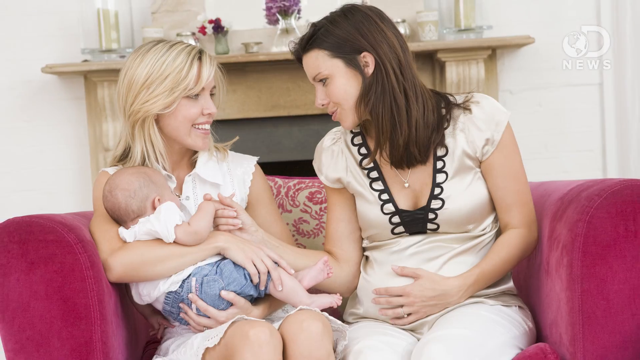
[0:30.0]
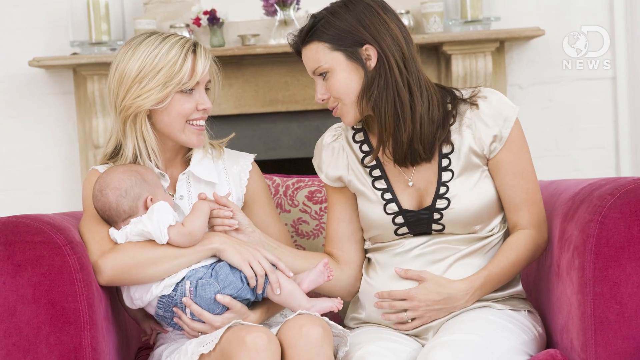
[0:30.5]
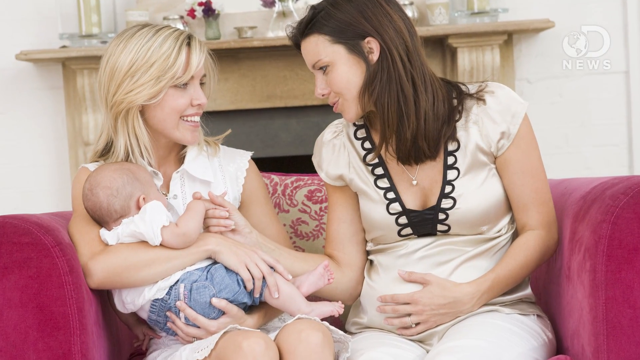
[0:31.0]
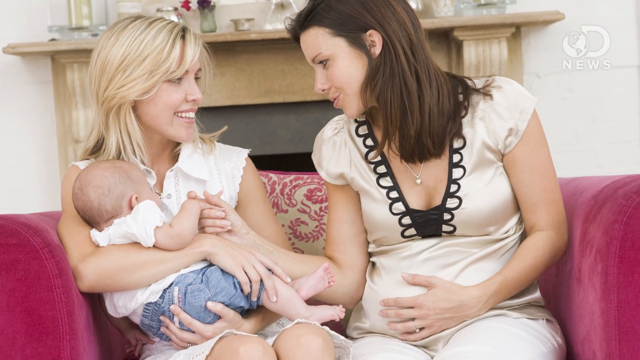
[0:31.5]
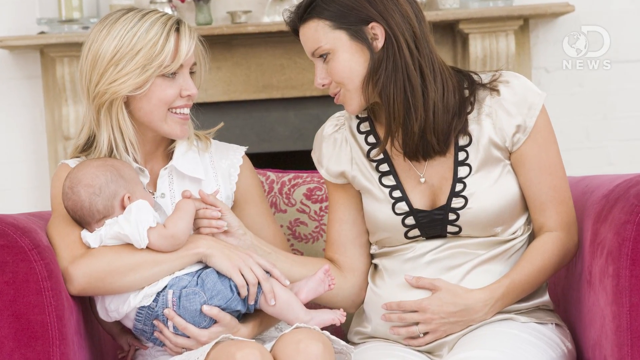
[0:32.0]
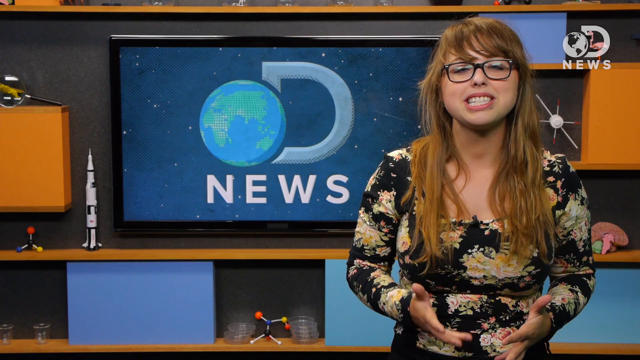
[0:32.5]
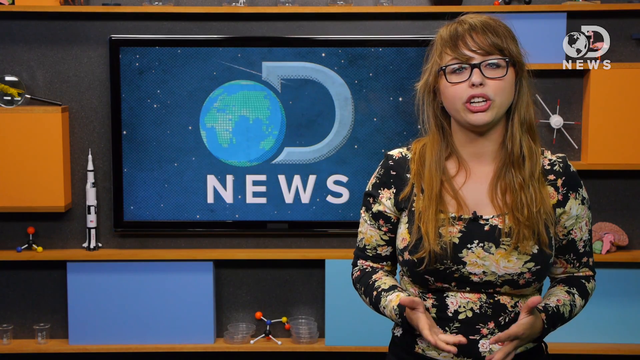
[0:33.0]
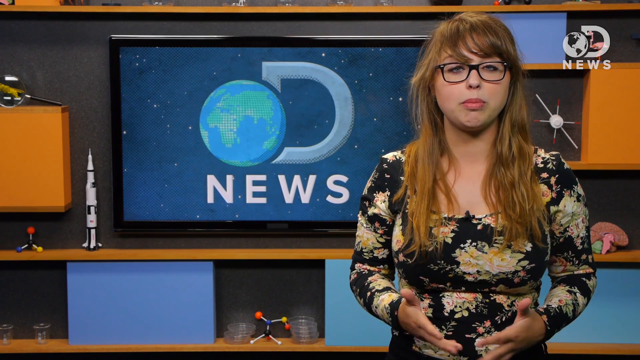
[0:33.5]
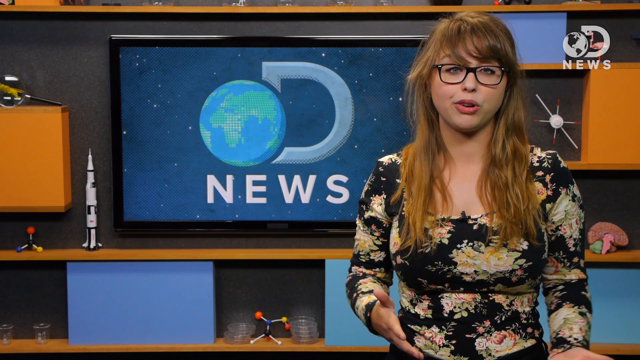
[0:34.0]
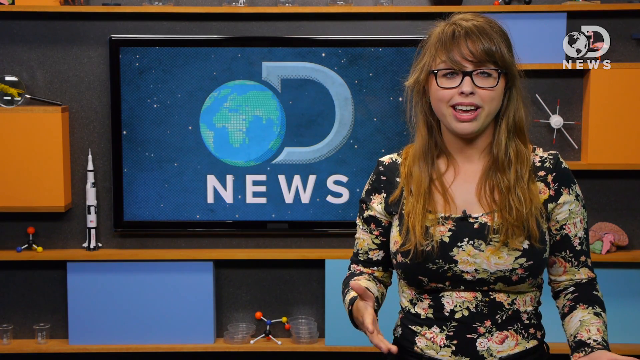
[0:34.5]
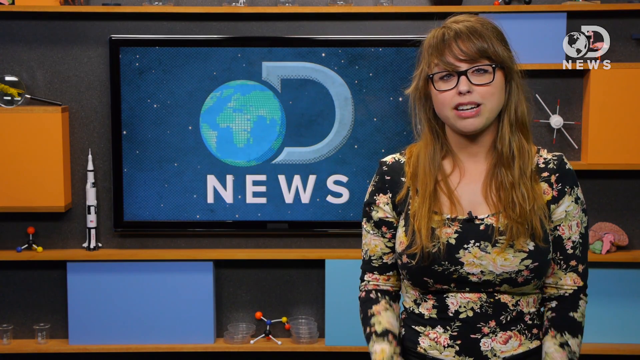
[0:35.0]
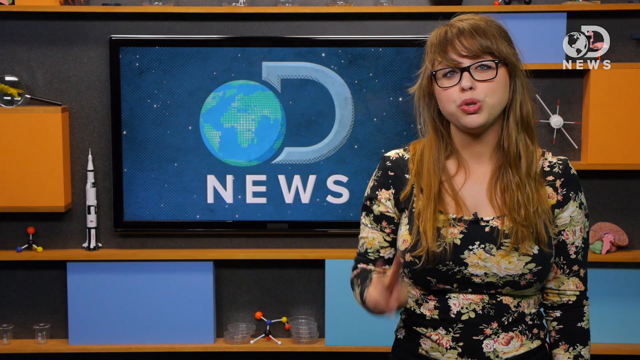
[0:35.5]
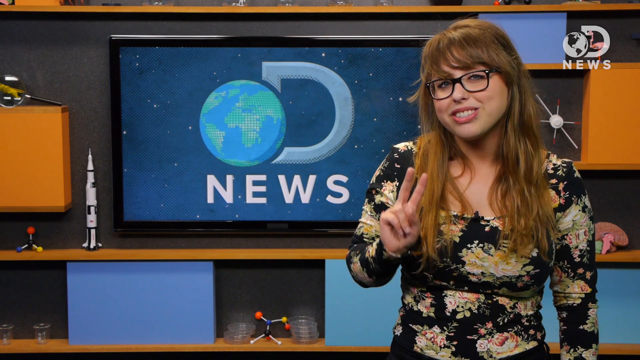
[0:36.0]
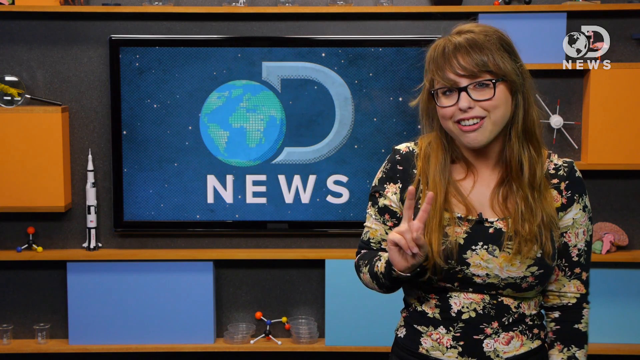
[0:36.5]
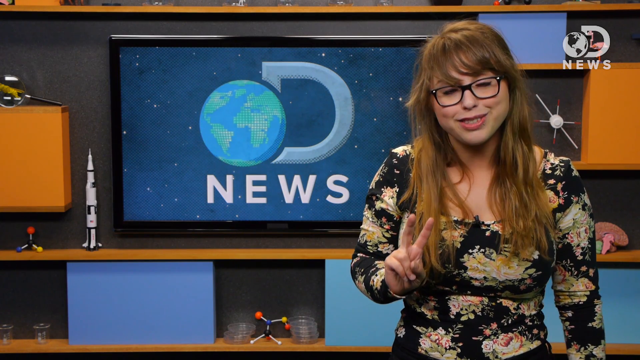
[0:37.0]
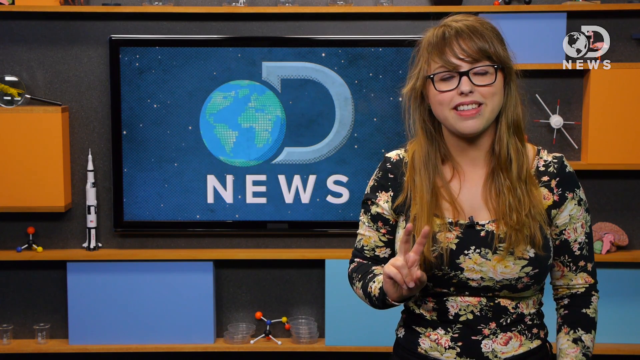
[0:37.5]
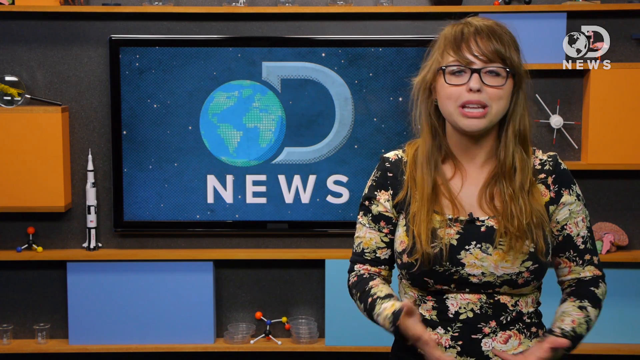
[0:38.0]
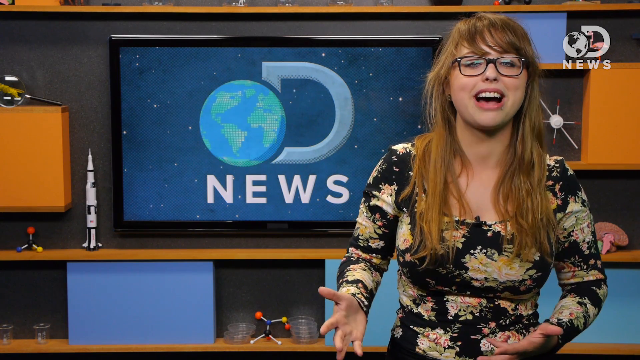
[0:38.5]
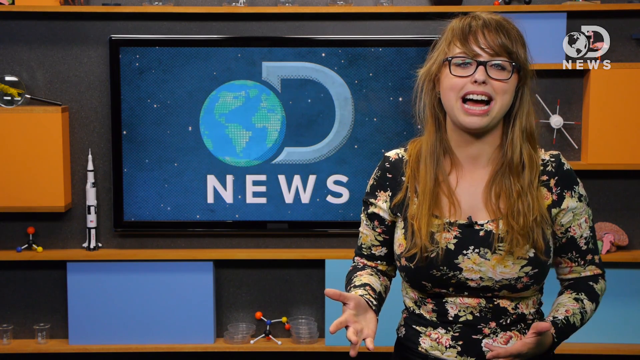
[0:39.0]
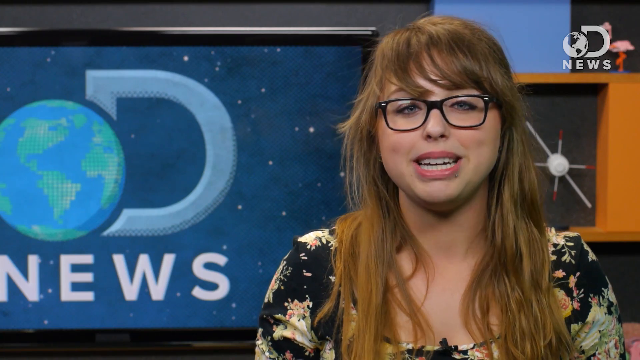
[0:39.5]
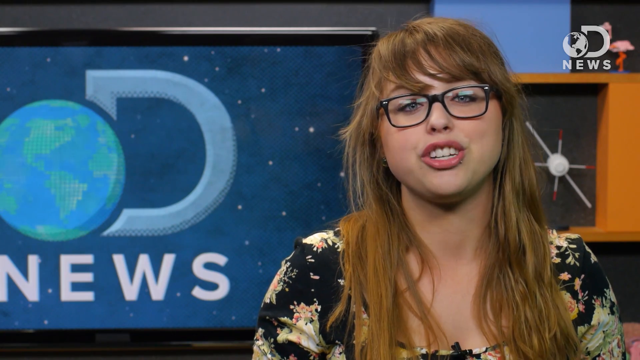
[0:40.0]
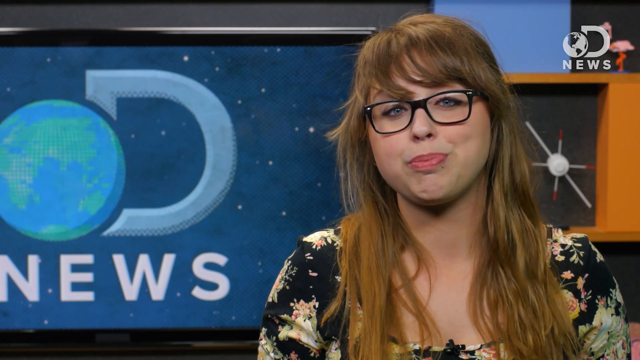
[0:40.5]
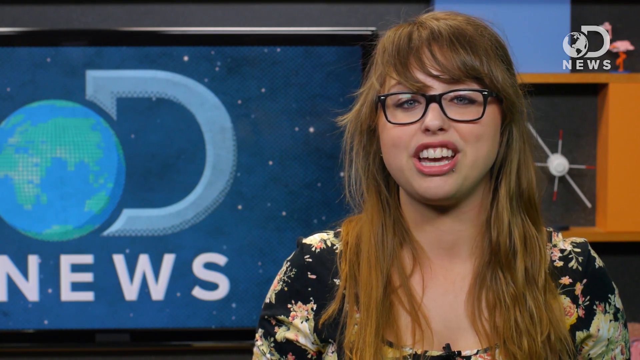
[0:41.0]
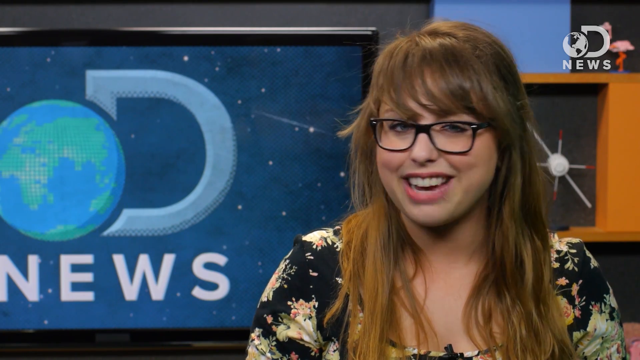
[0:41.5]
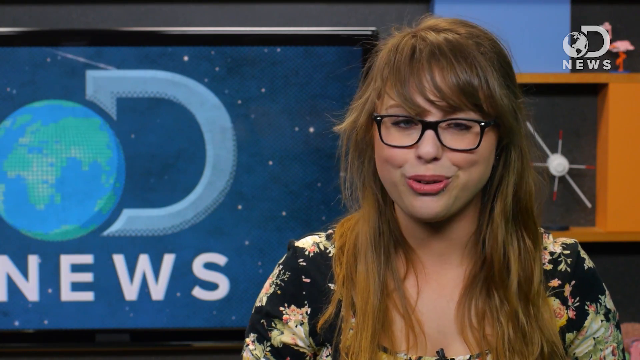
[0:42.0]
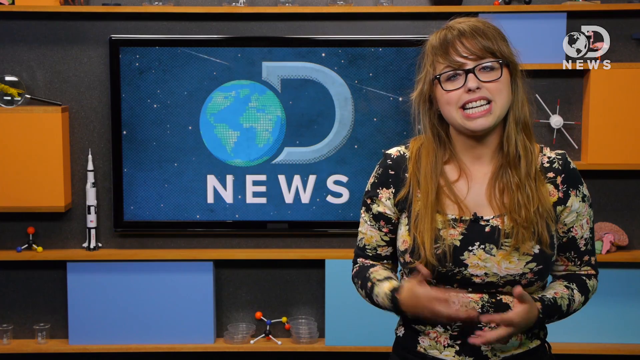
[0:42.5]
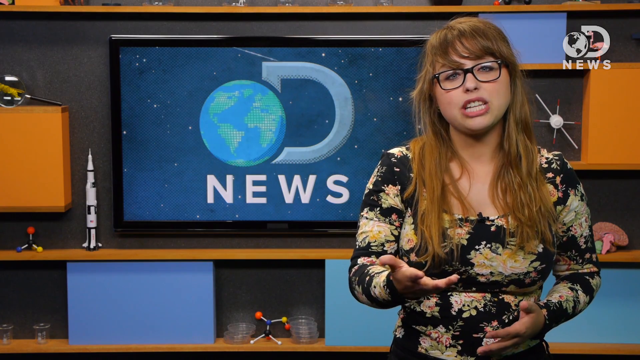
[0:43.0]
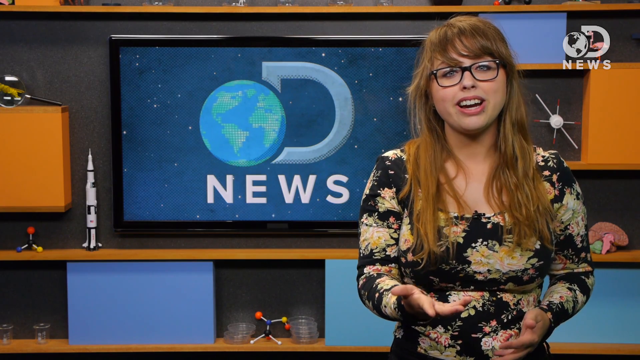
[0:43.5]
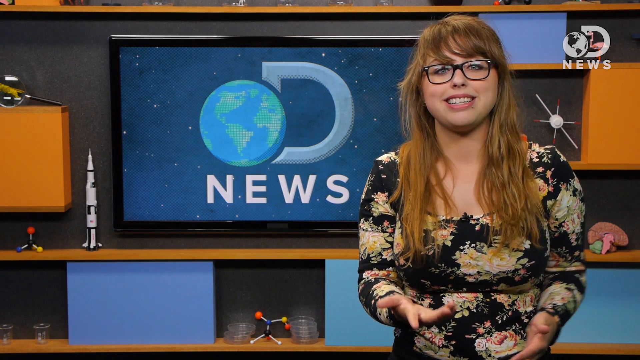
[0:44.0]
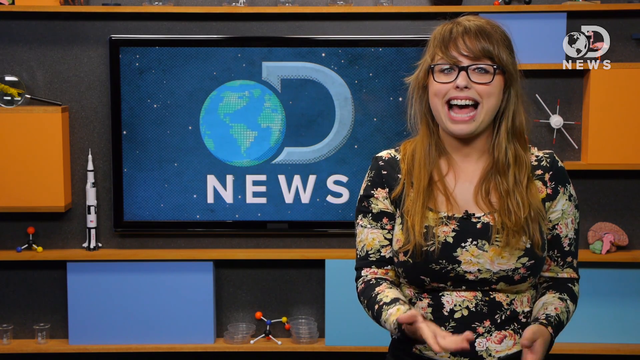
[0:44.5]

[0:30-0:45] An image shows two women and a baby. The woman on the right wears what appears to be a silk or glossy dress with black loops running diagonally across the chest, forming a V. She has her left hand on her belly and appears to be pregnant, and with her right hand she holds the hand of the baby of the woman on the left. She has long brown hair and a white skin tone. The woman on the left has blonde hair and a white skin tone, looks directly into the right woman's eyes, wears a white dress and holds her baby. The baby has a white skin tone and wears a white shirt and blue shorts. They are all sitting on a red couch, and there appears to be a pillow with red logos on it behind them. Behind that is a white wall and what appears to be a fireplace with flowers placed on top of it. The video then returns to the original woman, with black glasses and long orange-brown hair, speaking to the camera. Behind her are several orange square shapes, a spaceship toy and some fake DNA strands, and the fake brain is at the bottom right.